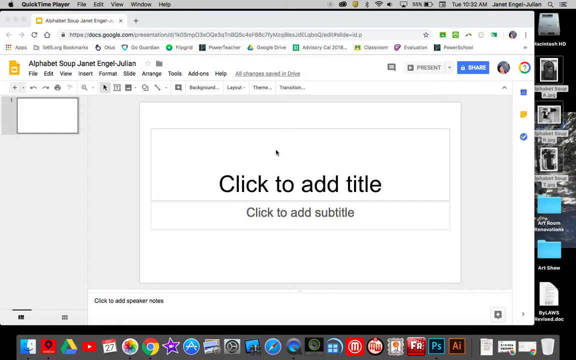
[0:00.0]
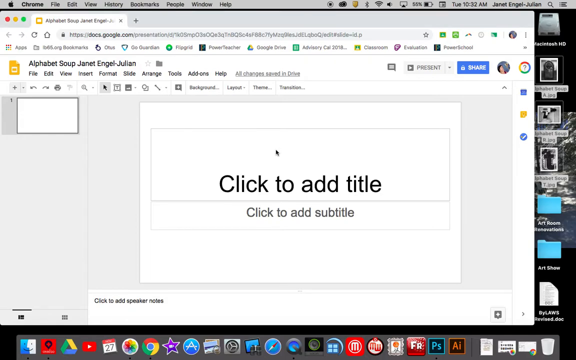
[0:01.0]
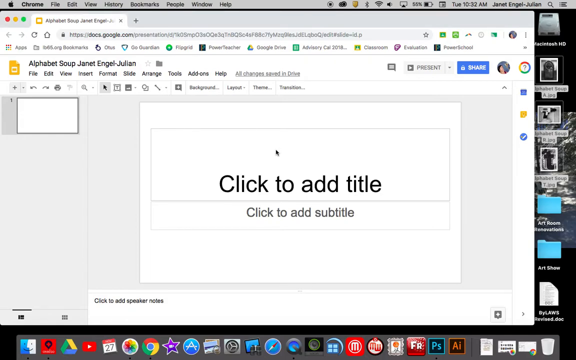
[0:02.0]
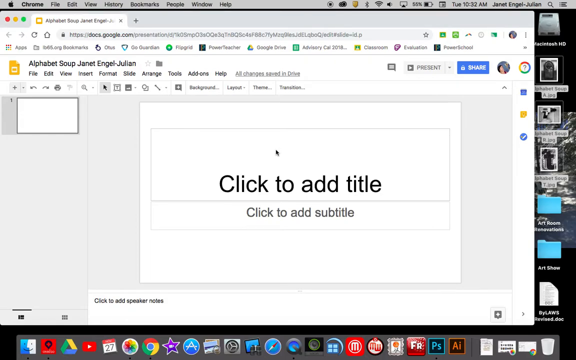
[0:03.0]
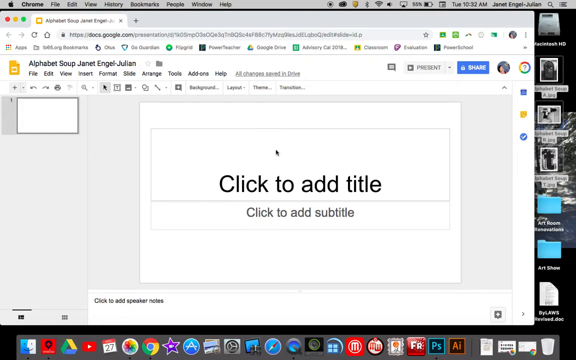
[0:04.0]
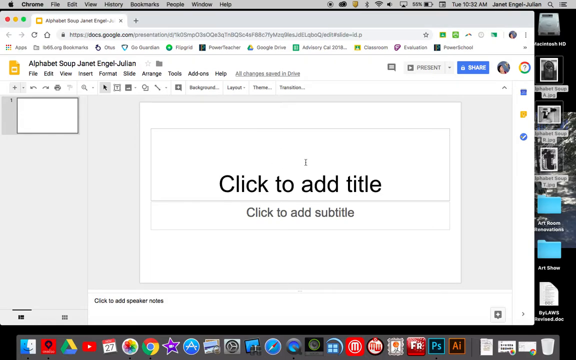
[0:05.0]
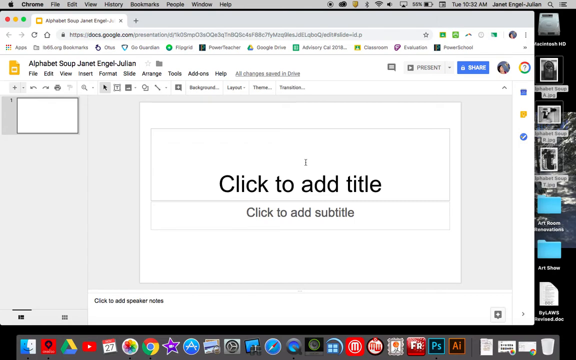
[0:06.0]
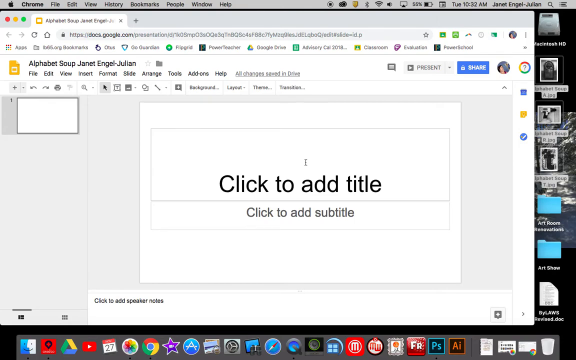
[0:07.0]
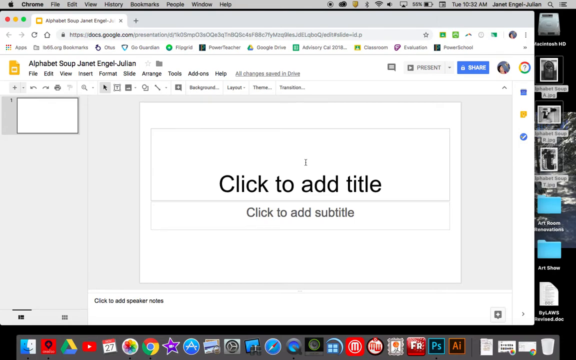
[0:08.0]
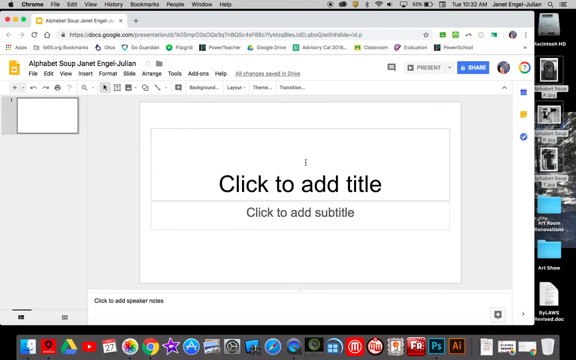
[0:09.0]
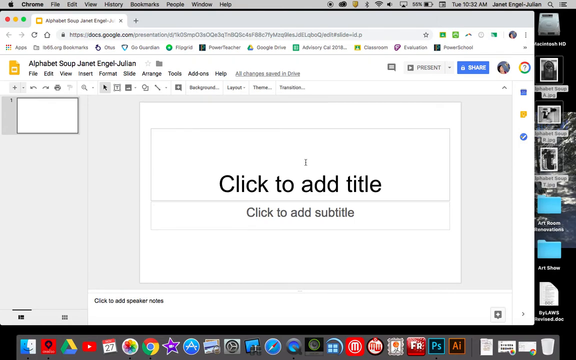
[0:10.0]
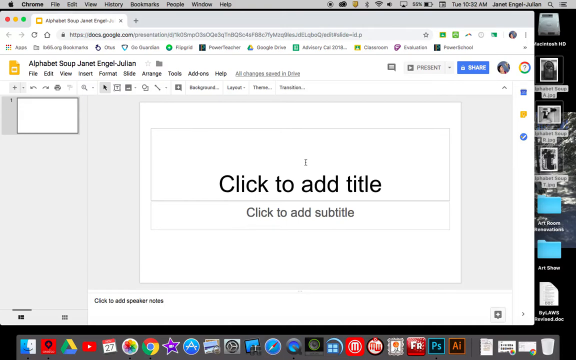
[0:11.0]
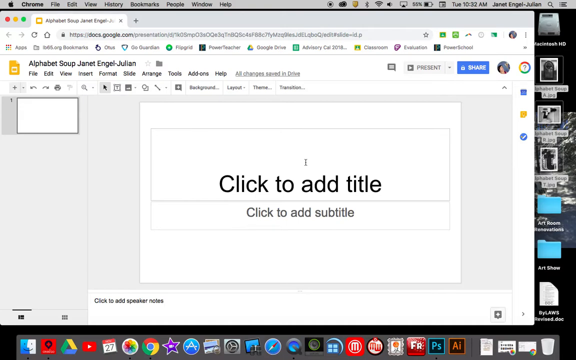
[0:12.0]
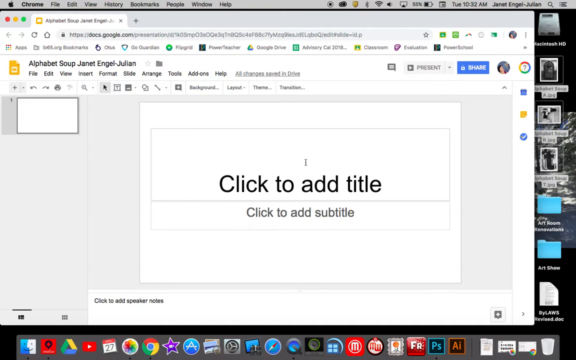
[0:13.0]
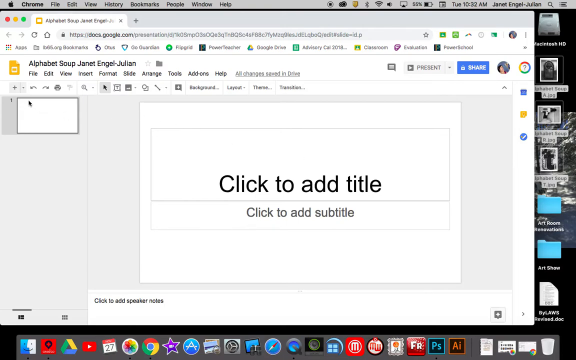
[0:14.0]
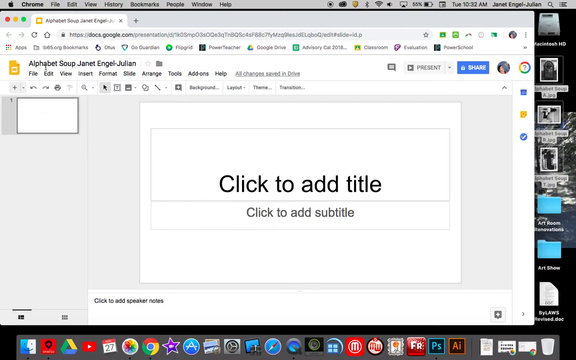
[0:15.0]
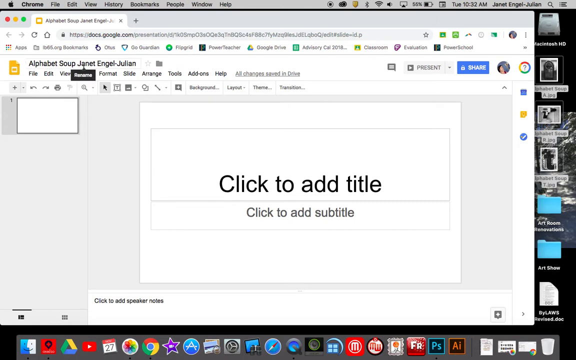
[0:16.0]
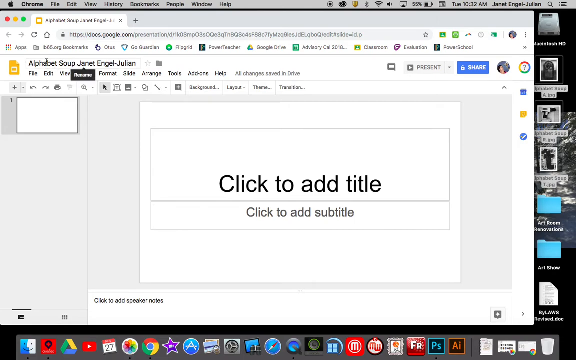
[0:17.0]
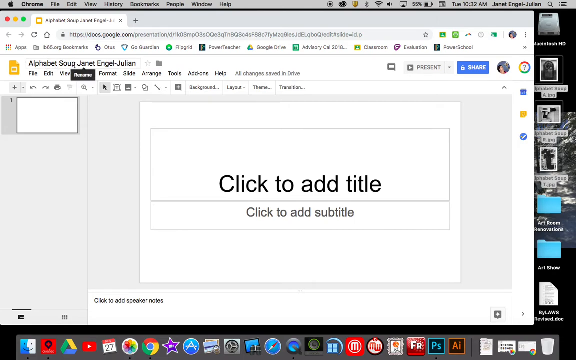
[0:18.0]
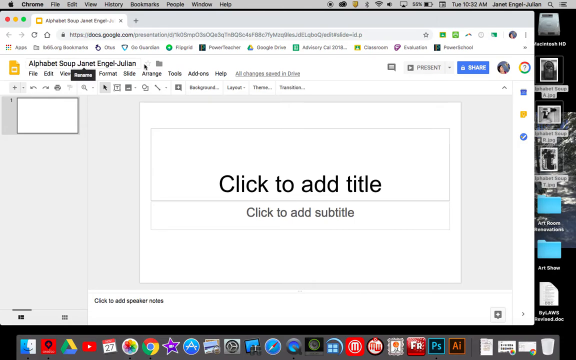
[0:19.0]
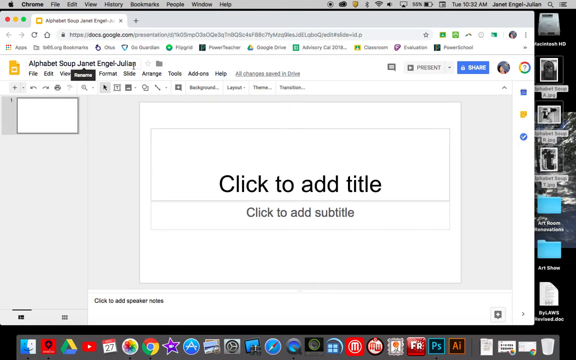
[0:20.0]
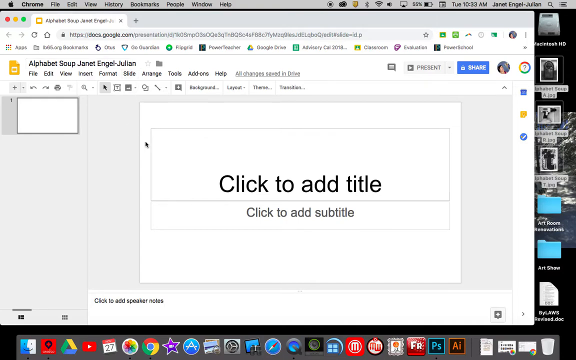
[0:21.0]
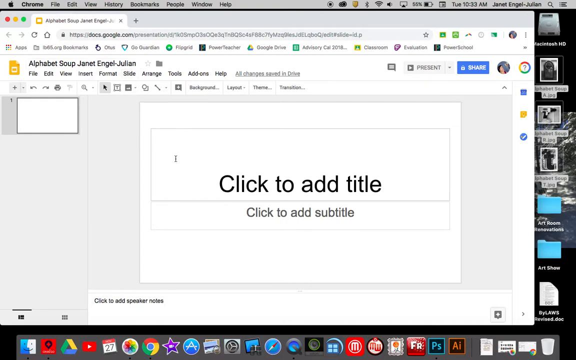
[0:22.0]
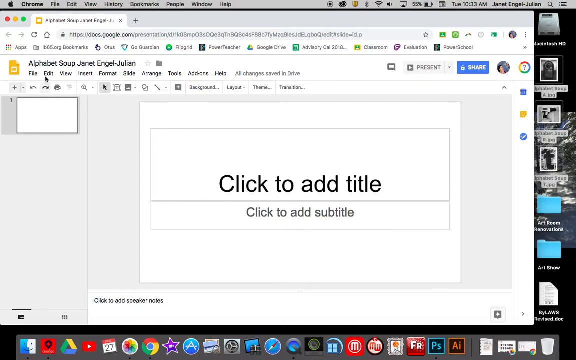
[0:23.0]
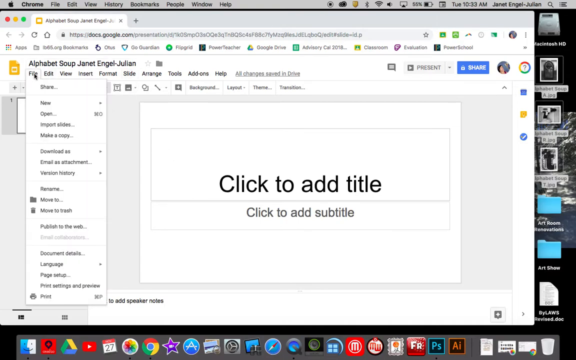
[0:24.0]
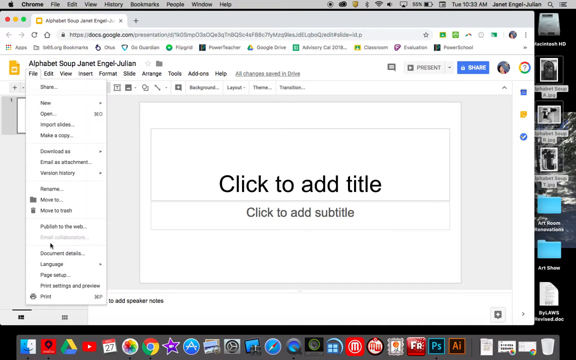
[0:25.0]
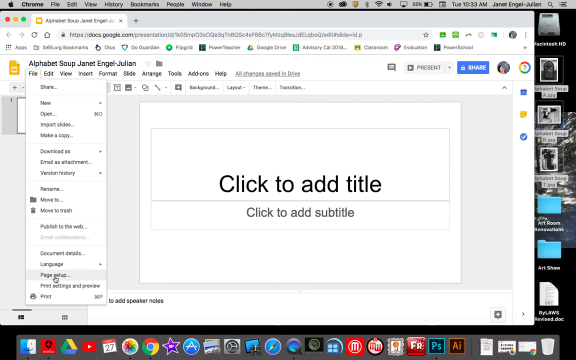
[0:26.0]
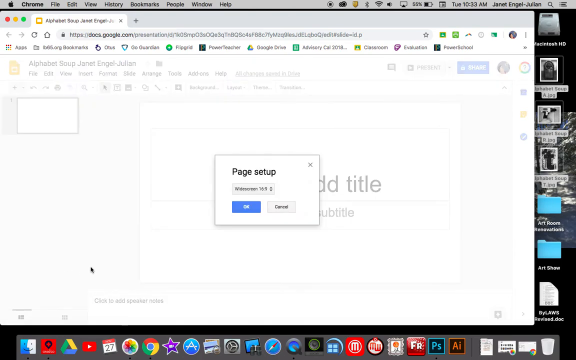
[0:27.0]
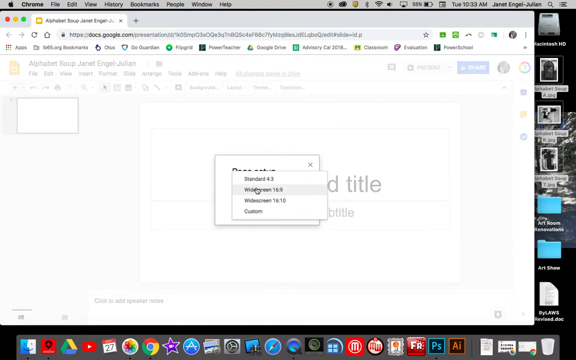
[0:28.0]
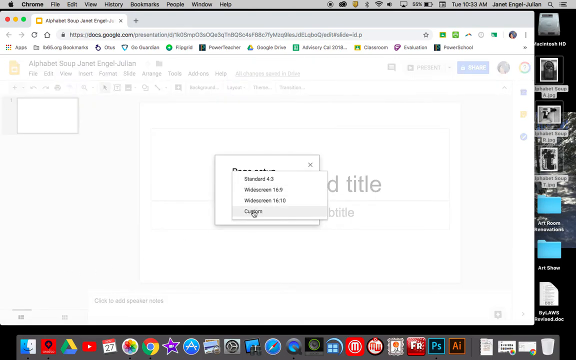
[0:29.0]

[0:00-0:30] A Mac screen shows the Apple symbol with the title "Chrome" in the top left corner. The name "Jeanette Engel Julian" is in the top right corner, probably the person's account. The page looks like some kind of slideshow app: the background is completely white, with black text in the middle of the screen reading "Click to add title" and, underneath in slightly lighter, smaller text, "click to add subtitle". The menu items file, edit, view and insert run along the top of the screen on the left. The URL shows the page is in Google Docs, and the file's title appears to be "Alphabet Soup Jeanette Engel Julian". The user moves the mouse slightly in the middle of the screen, drags it over to the left and hovers it above the document title, and a little box reading "Rename" appears underneath. The mouse goes back to the center of the screen, then up to the left, where the user clicks the file button, scrolls all the way down the drop-down menu and clicks page setup. A white box titled "page setup" opens in the middle of the screen. The user clicks on the button and then clicks custom.